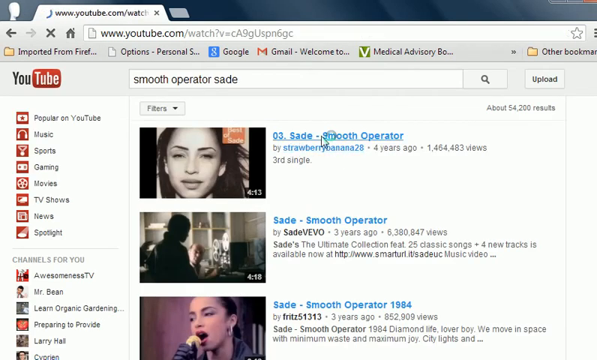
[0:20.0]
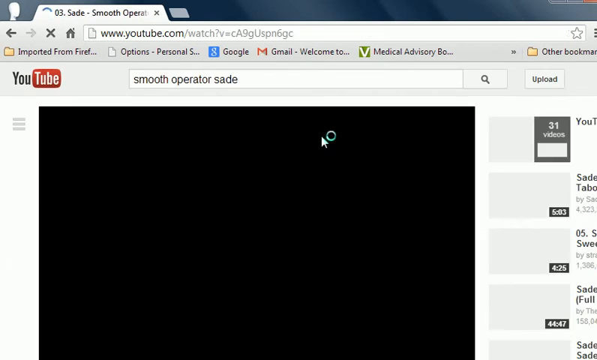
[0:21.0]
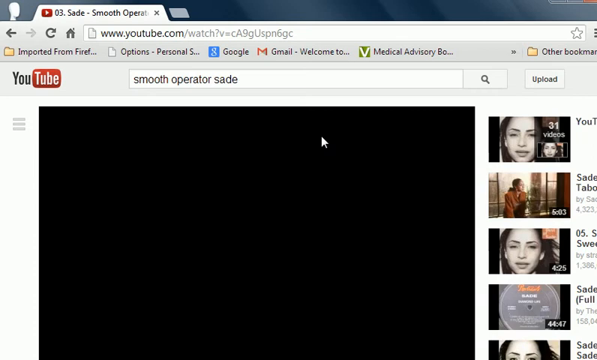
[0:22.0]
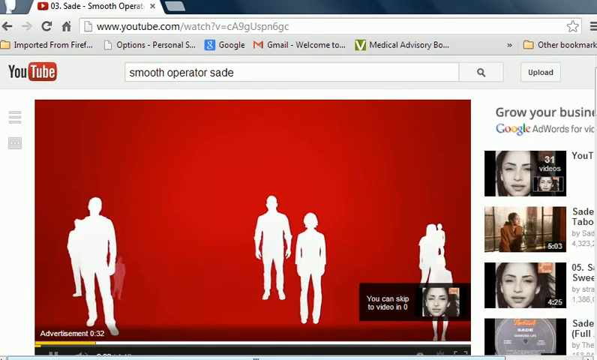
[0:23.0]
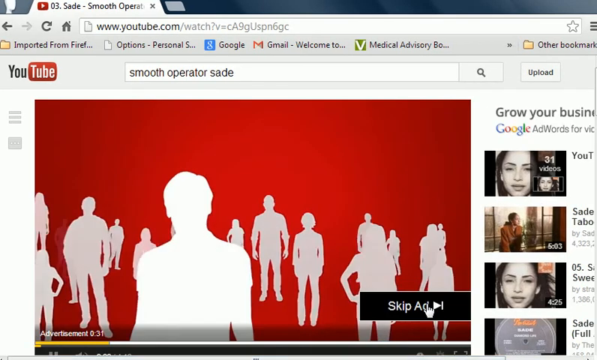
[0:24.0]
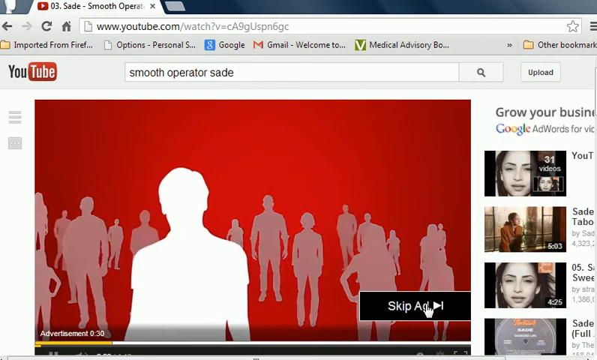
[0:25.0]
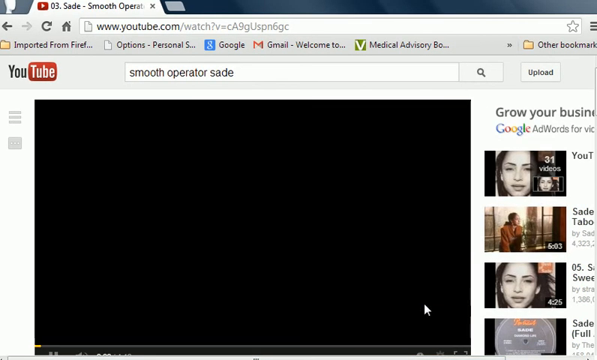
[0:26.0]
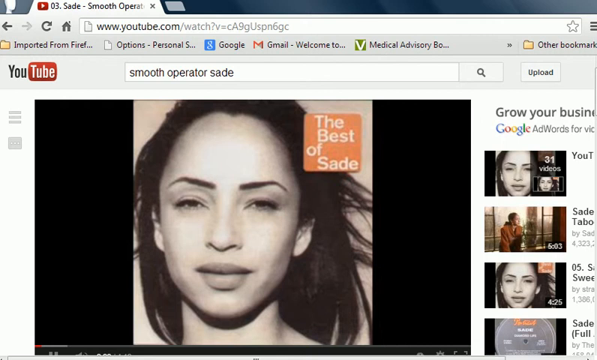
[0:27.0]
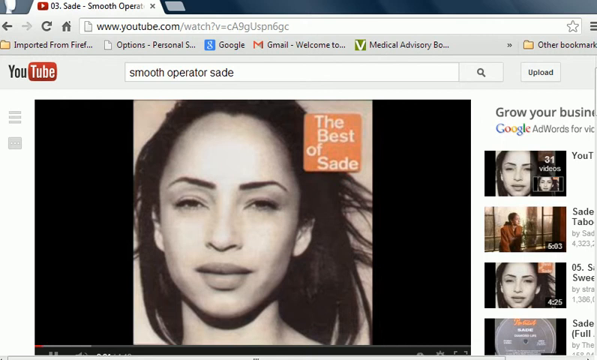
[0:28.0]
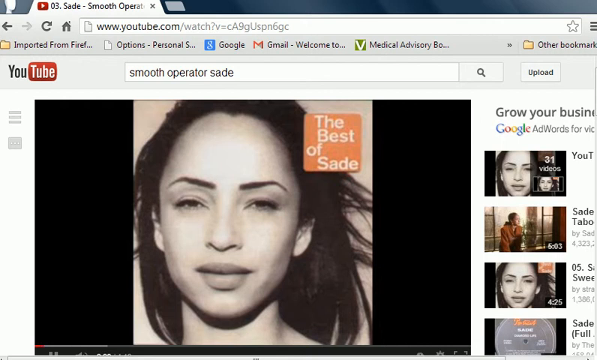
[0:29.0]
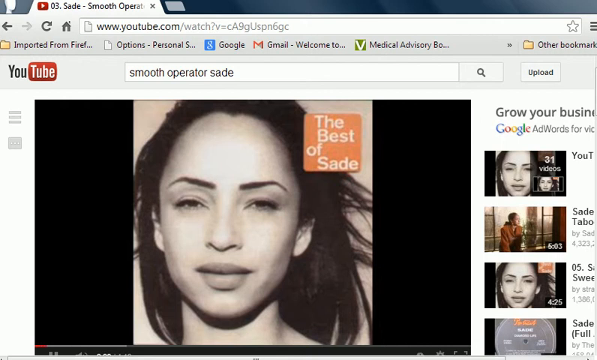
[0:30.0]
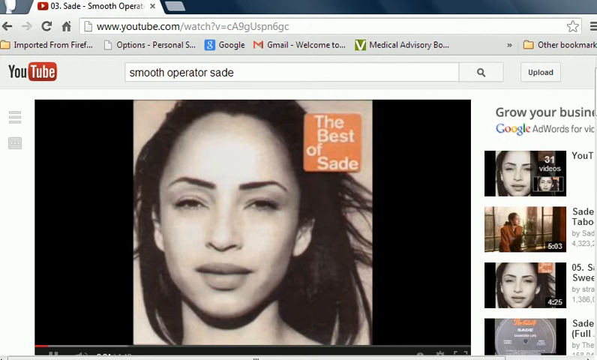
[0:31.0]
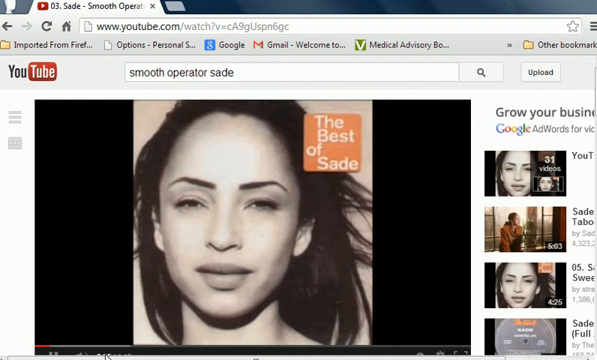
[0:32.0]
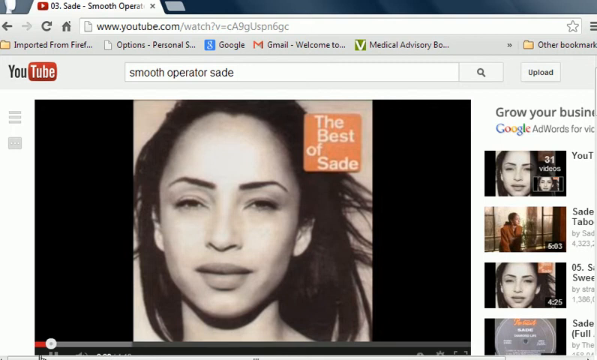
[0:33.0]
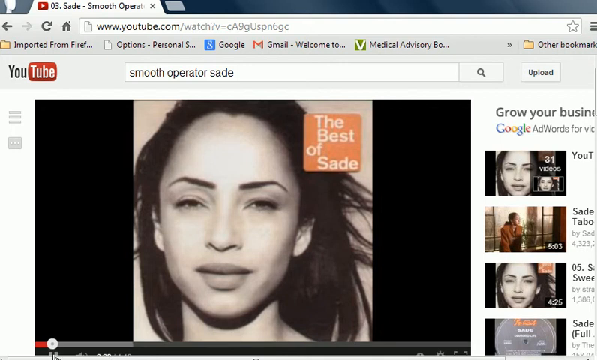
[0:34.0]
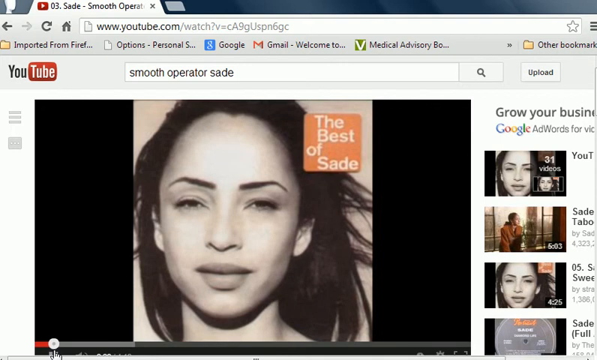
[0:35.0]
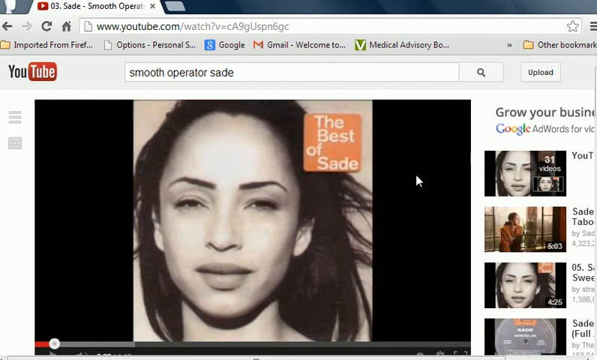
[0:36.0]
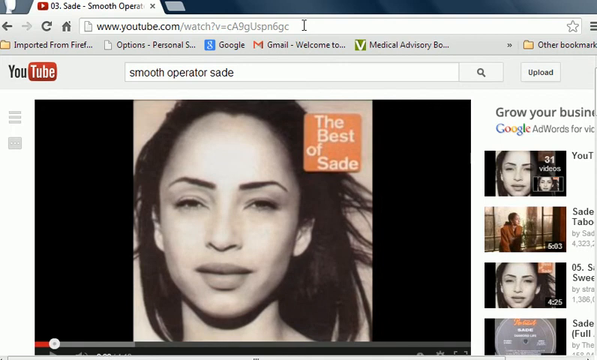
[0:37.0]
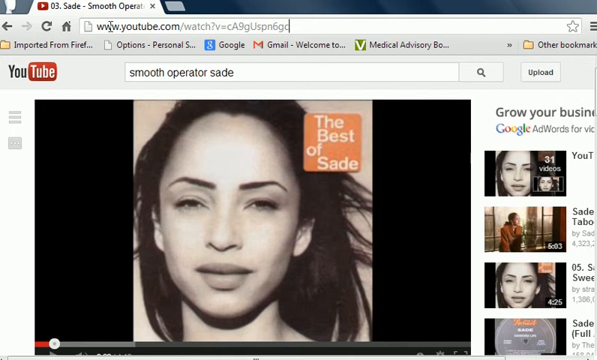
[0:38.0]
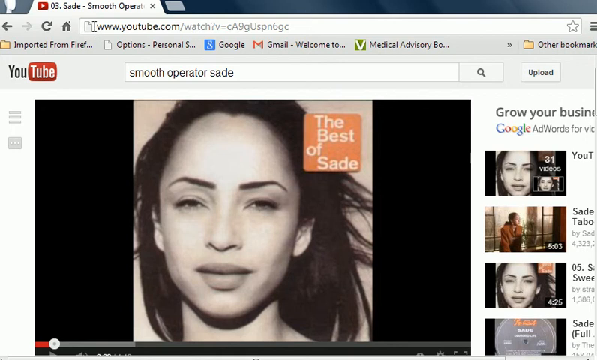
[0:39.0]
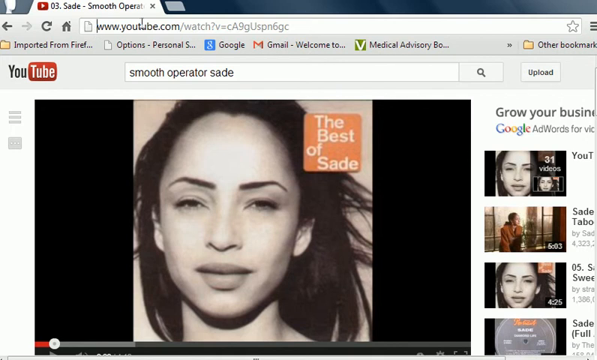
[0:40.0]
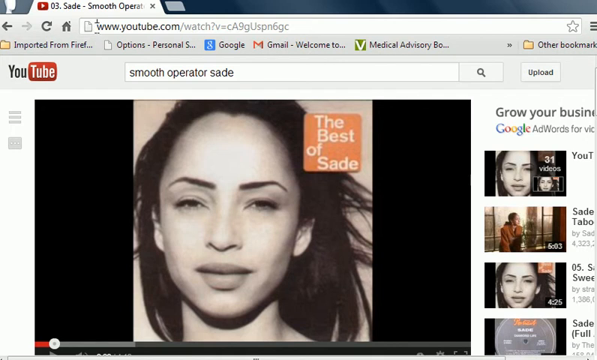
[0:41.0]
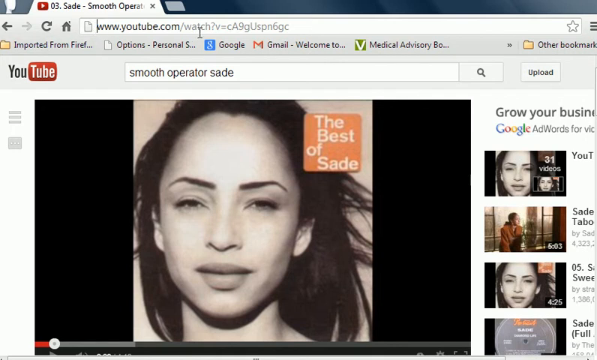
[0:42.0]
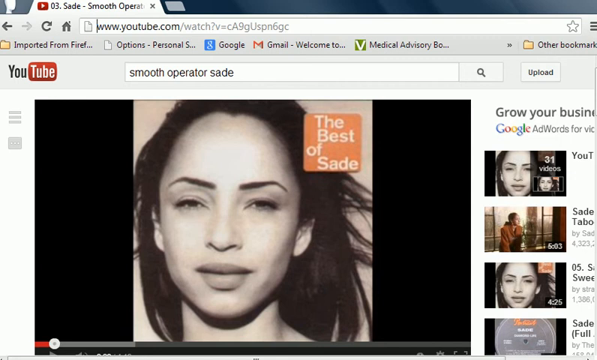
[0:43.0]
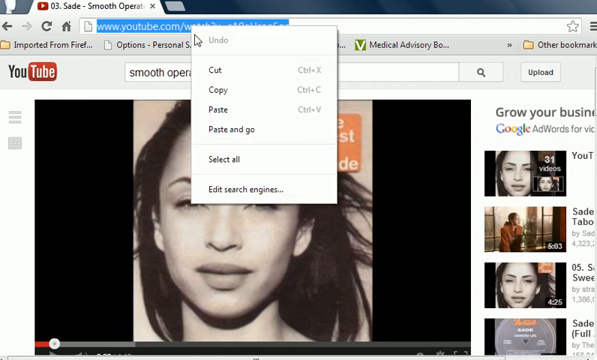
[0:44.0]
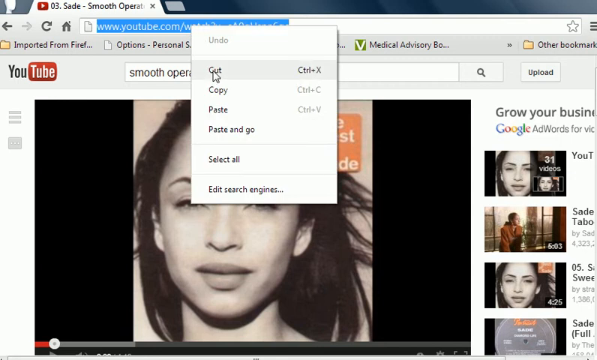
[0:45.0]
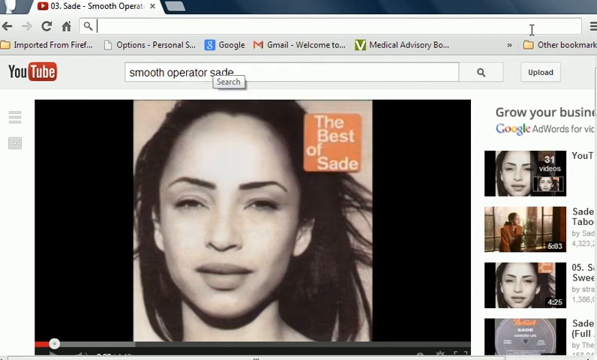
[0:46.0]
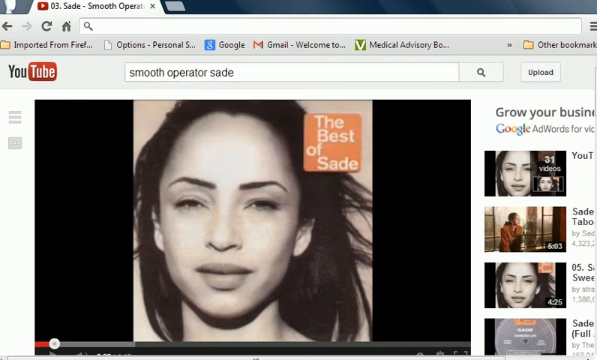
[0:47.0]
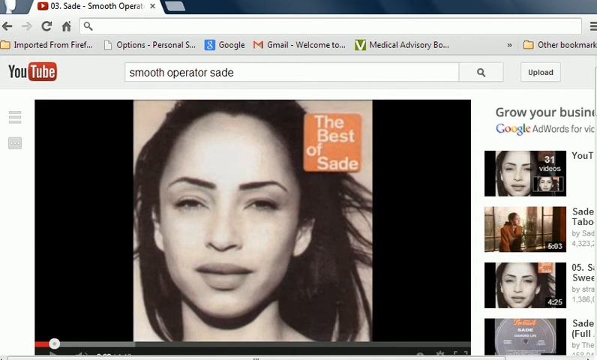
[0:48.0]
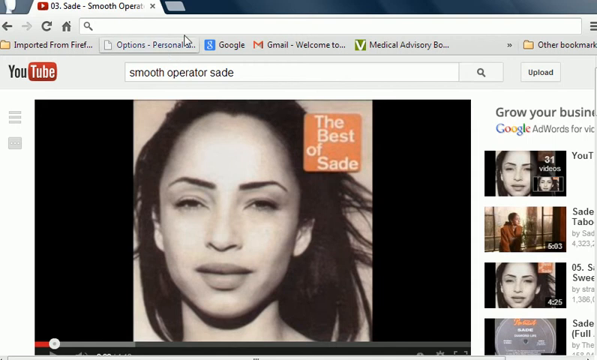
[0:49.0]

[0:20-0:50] The white mouse pointer clicks the title of the first YouTube search result, "03. Sade - Smooth Operator." The search bar at the top shows "smooth operator sade." The view cuts to a black rectangle in the center of the screen, and the video begins to play. It starts with a red background showing white outlines of several people; more and more people appear and fade away. One person, a man, is larger than the rest and gets the focus. The rectangle turns black again, and then a woman with dark hair and eyebrows appears. In the top right is an orange rectangle with rounded corners reading "The Best of Sade," which appears to be an album cover. A video progress bar is visible at the bottom of the video. The mouse selects the URL, a right-click menu appears, and the mouse selects "Copy." The URL is then deleted from the search bar.